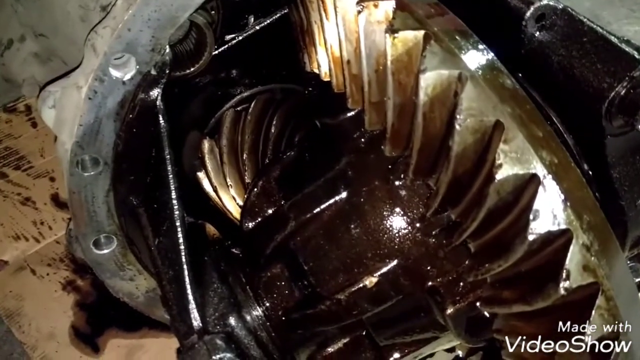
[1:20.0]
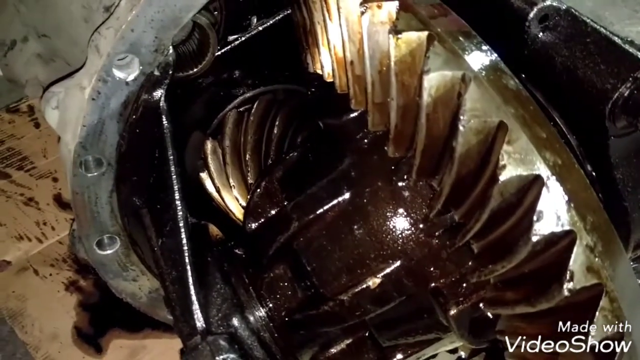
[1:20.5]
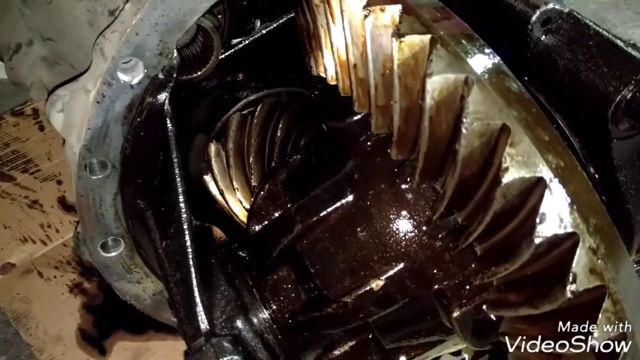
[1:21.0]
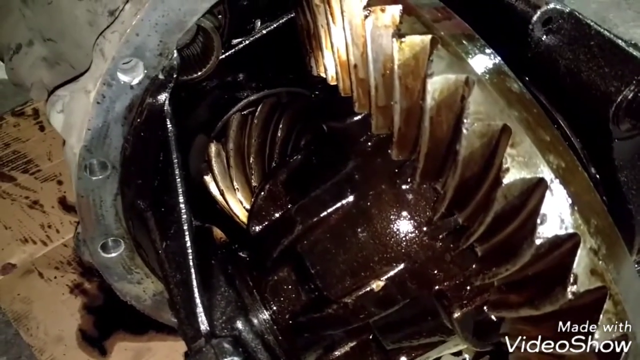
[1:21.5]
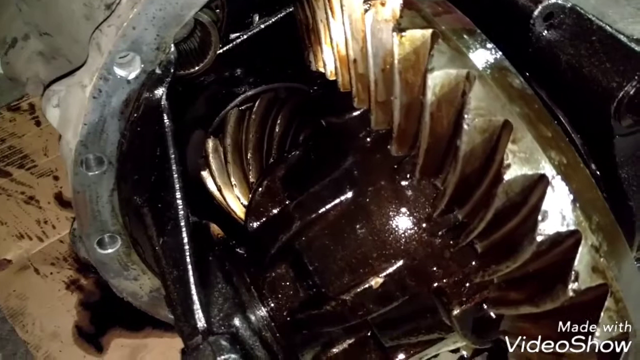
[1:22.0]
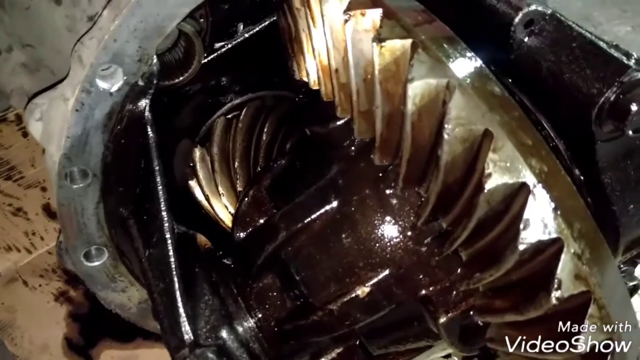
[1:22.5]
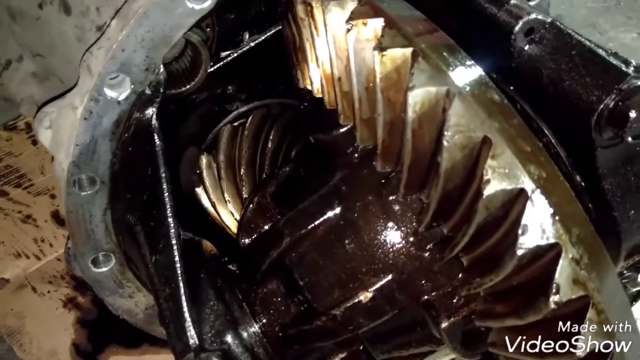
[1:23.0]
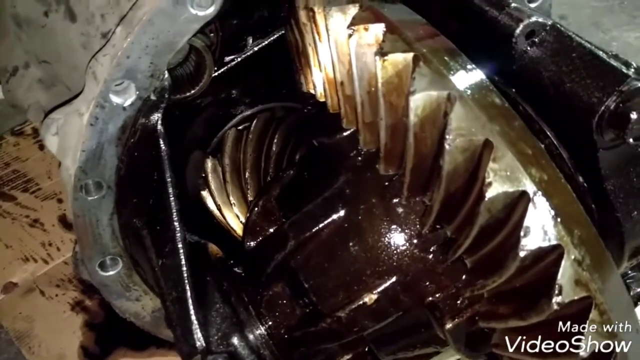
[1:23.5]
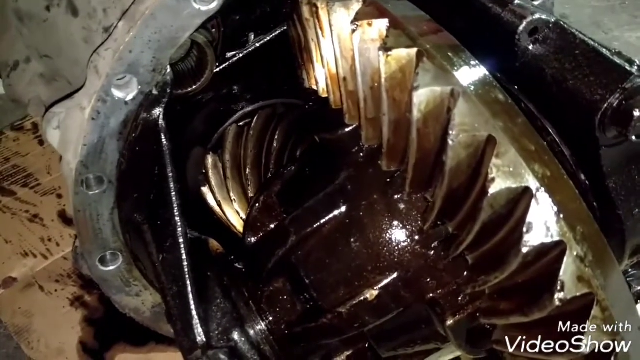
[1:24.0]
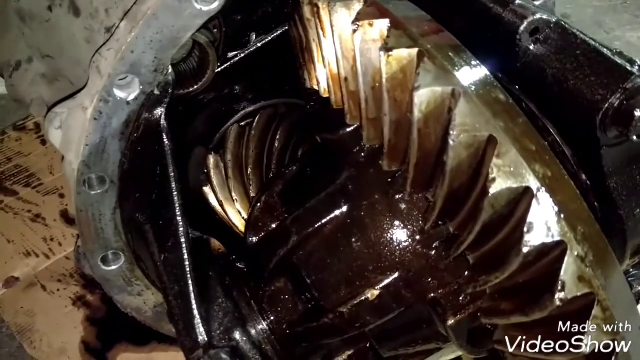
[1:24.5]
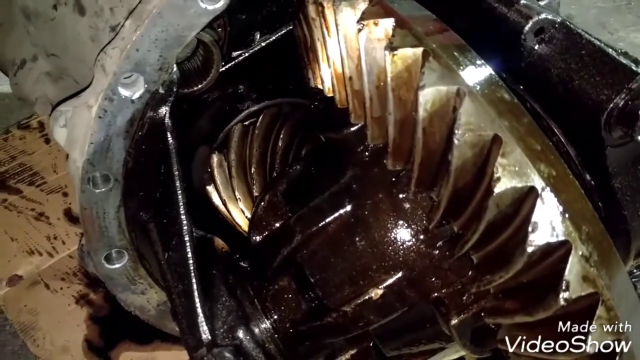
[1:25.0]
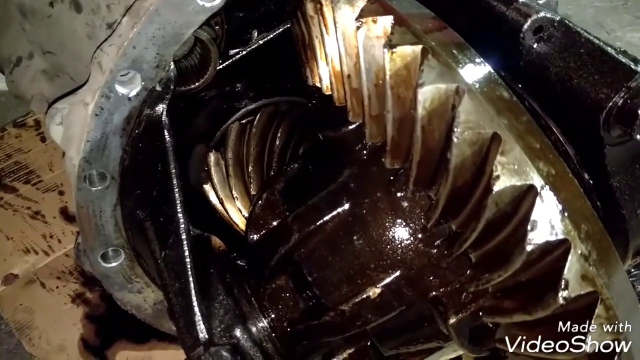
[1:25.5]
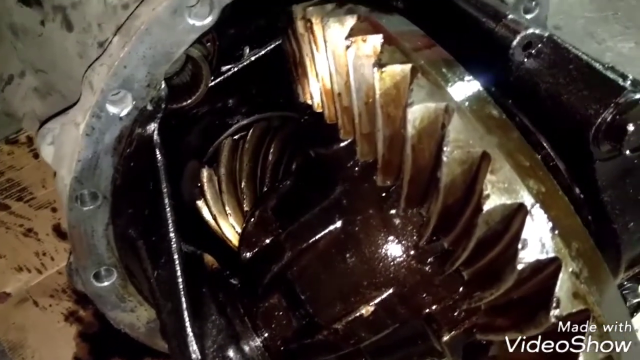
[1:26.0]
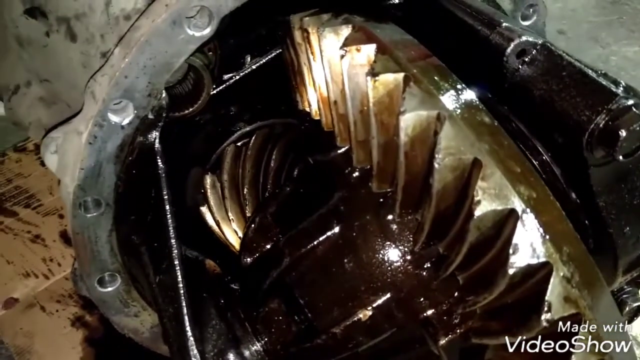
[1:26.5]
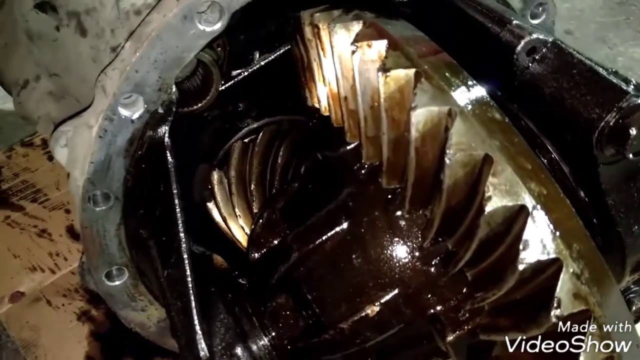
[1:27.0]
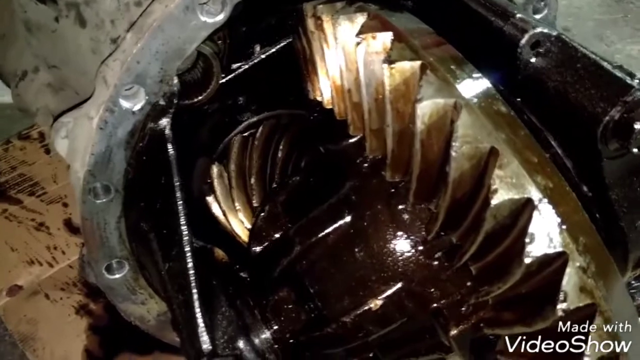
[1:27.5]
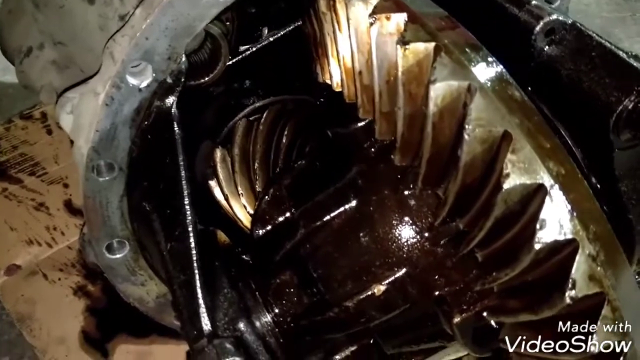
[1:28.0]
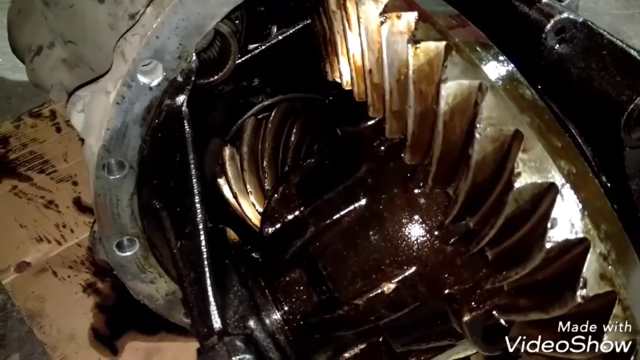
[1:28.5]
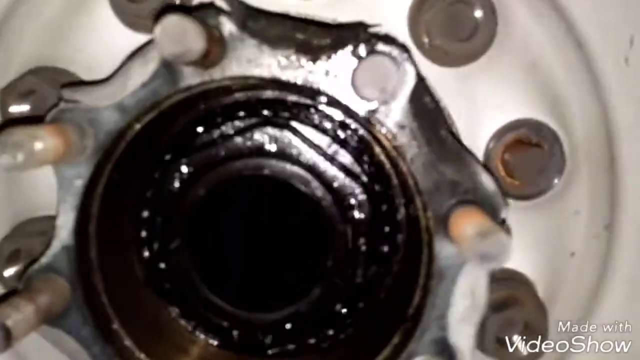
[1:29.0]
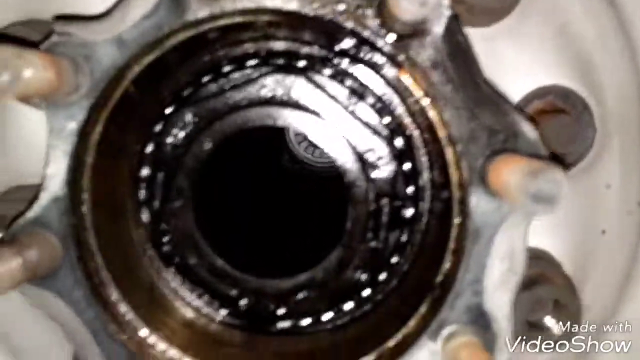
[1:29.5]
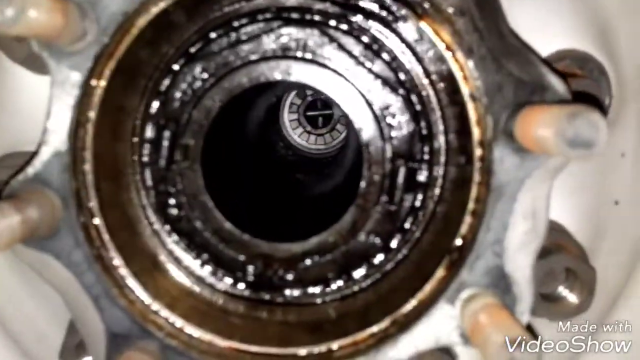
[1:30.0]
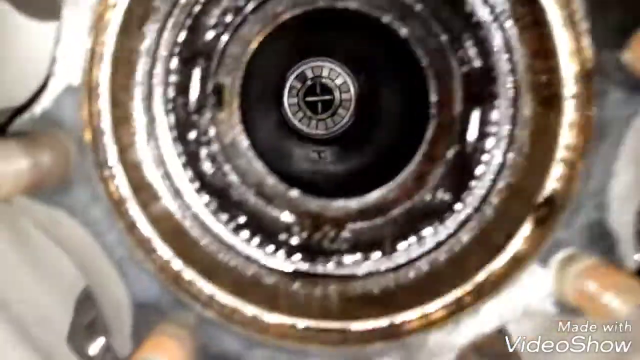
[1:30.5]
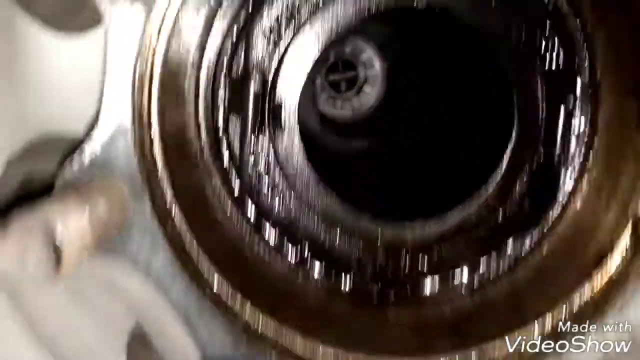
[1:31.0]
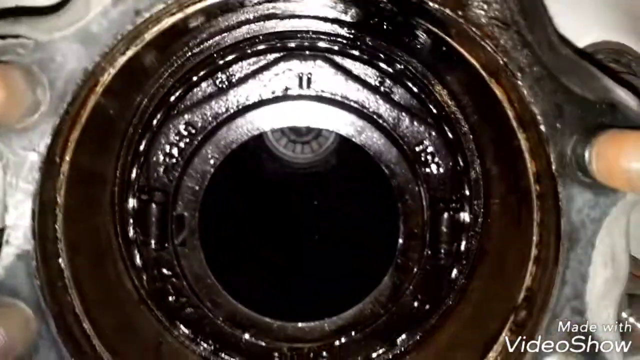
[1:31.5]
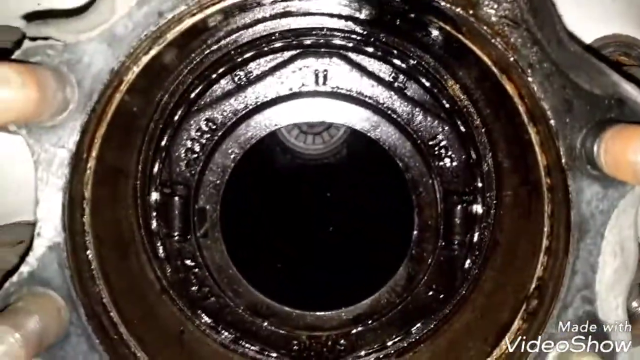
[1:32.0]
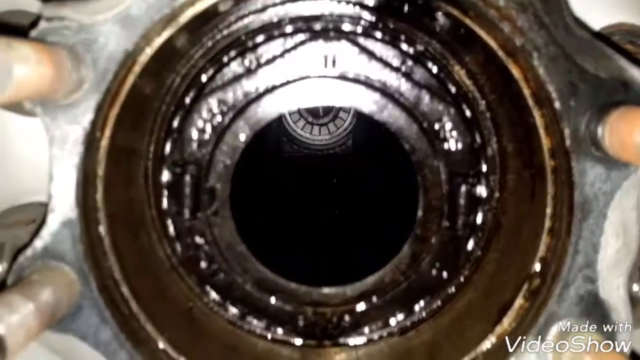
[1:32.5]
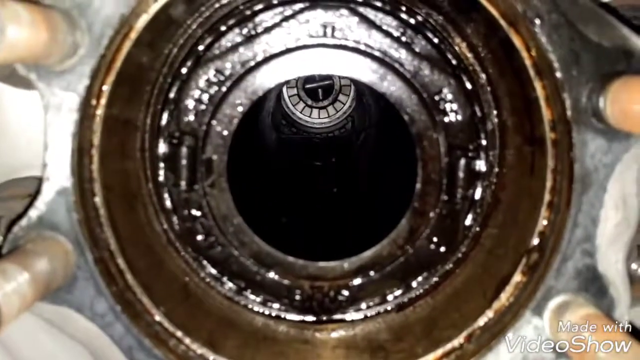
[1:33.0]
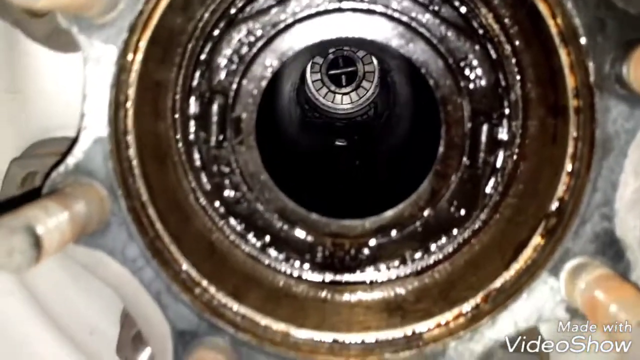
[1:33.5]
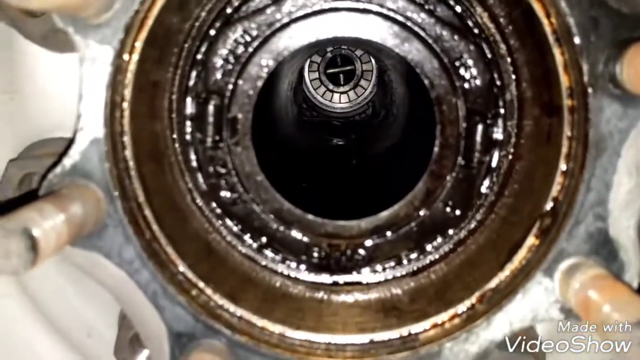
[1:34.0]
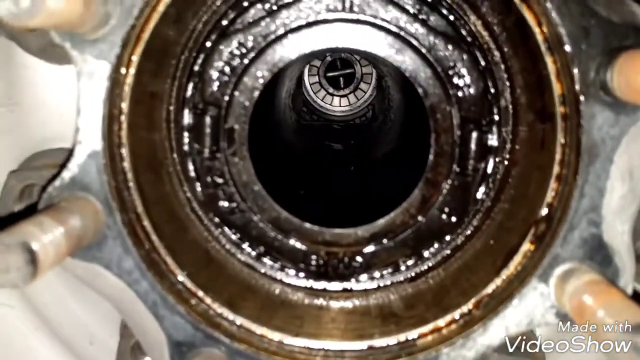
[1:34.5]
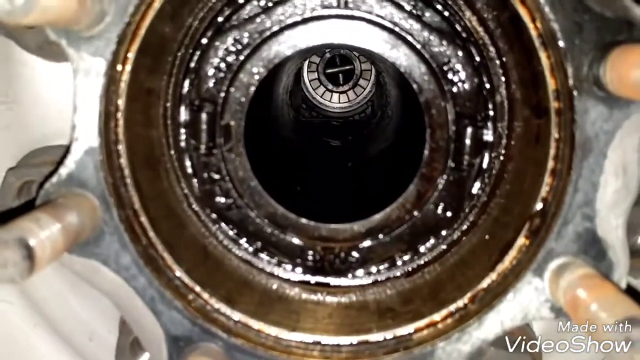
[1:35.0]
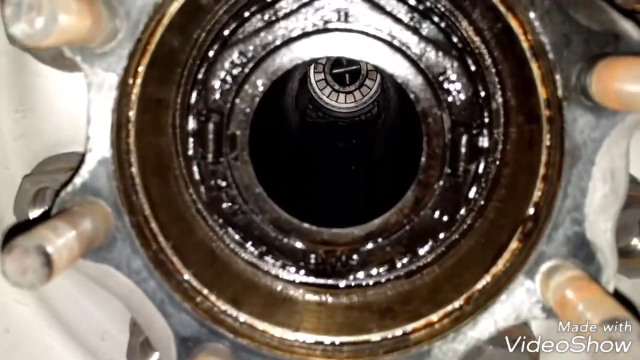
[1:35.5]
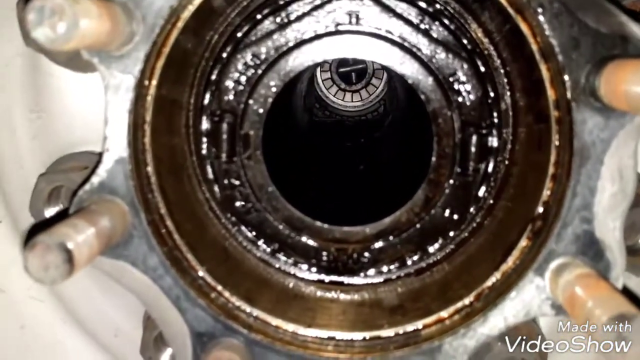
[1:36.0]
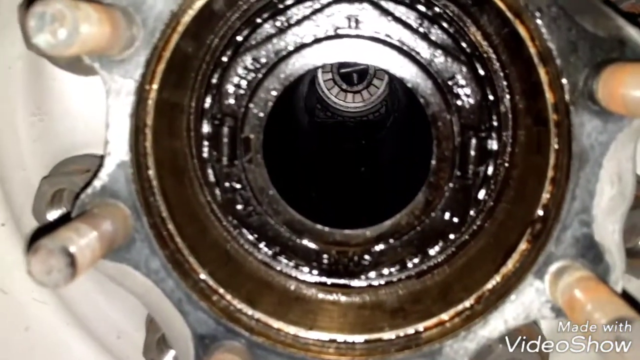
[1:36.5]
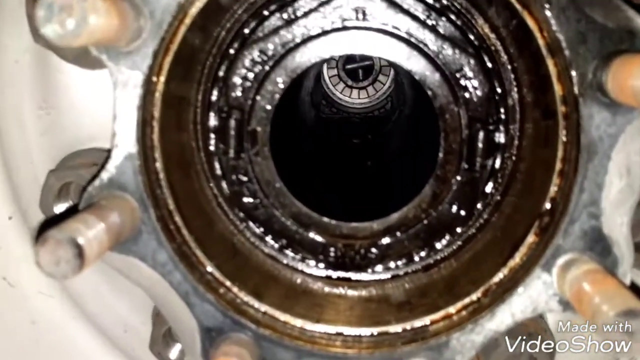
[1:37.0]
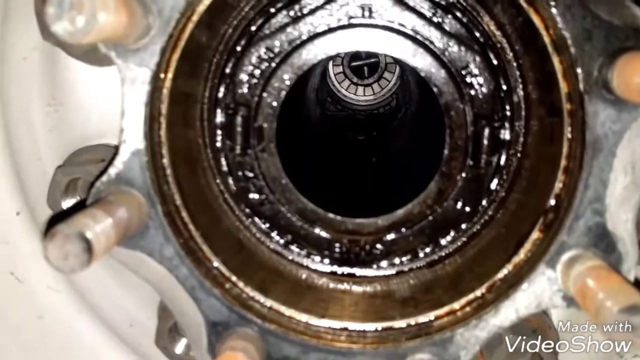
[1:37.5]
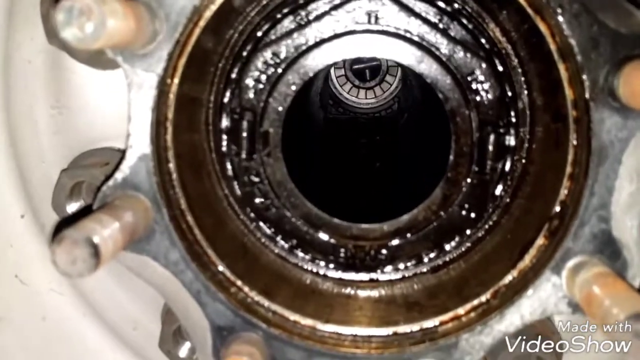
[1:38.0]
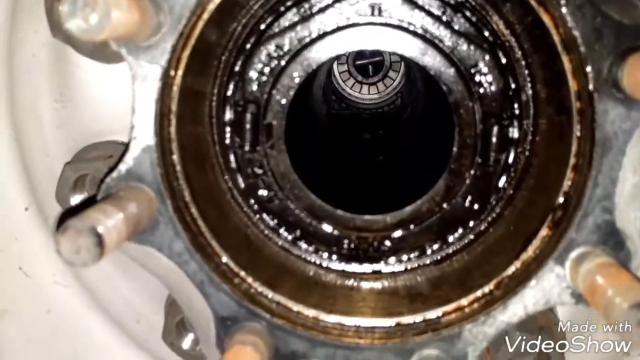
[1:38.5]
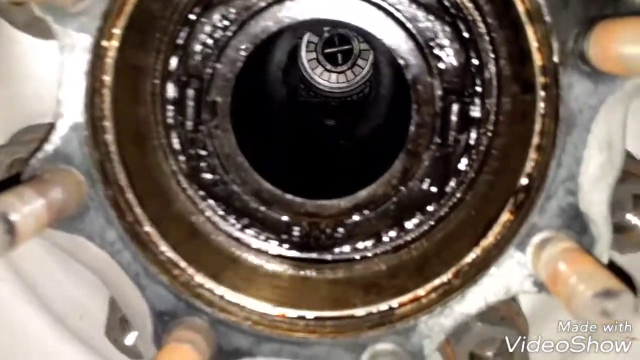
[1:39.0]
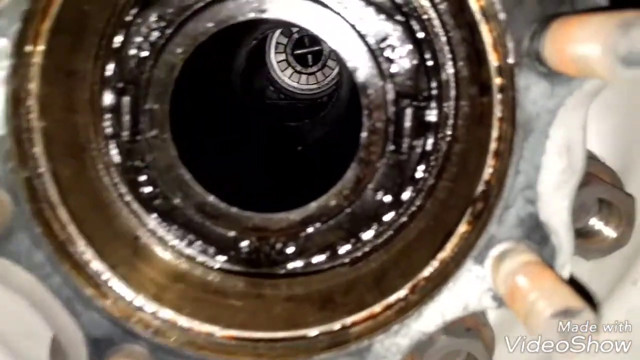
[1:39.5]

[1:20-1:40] A piece of machinery has two toothed wheels, similar to cog wheels, that meet each other inside a cast iron chassis or body. It is very oily inside. It sits on top of a piece of cardboard, which is on a concrete slab. One wheel is seen face up in side view, while the other, much smaller one is face on, seen as a circle. The camera is shaky. A very close-up view follows of a piece of machinery with bolts protruding from around its face, and then the camera goes very close to look inside a hole in its middle, through to the back of it.